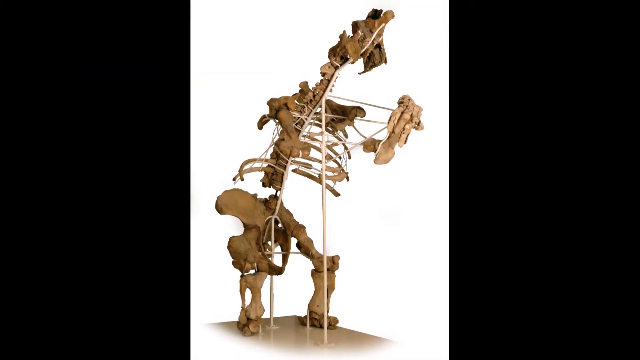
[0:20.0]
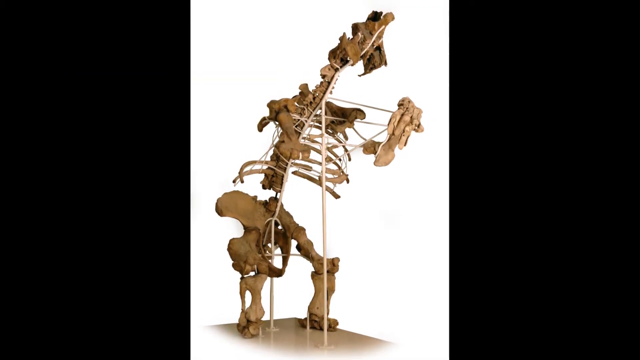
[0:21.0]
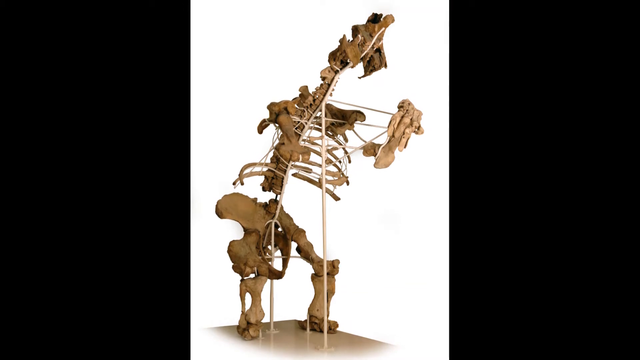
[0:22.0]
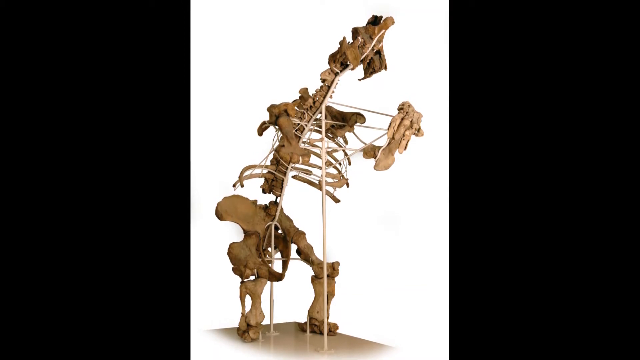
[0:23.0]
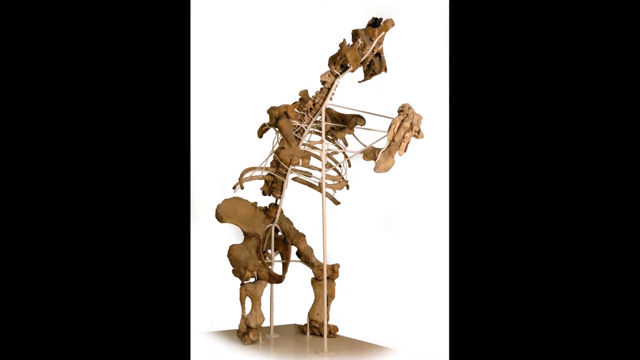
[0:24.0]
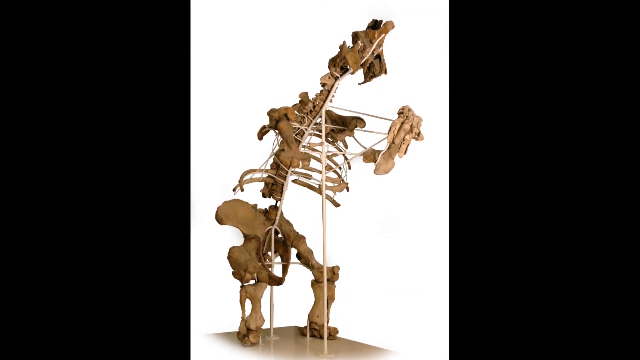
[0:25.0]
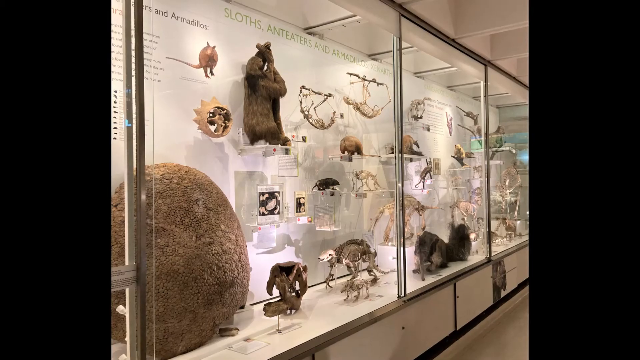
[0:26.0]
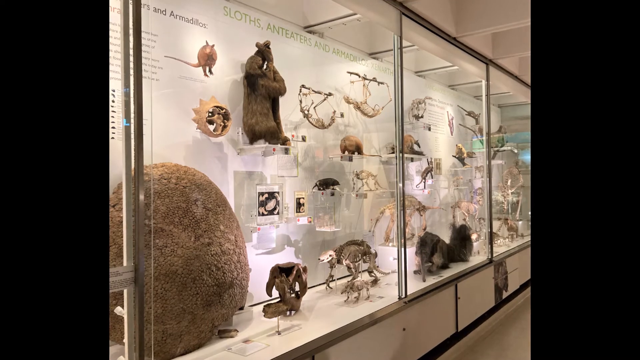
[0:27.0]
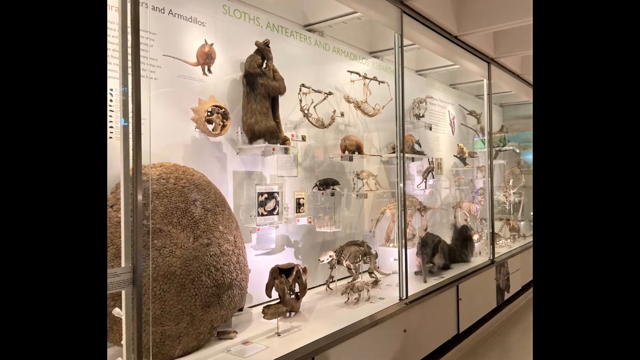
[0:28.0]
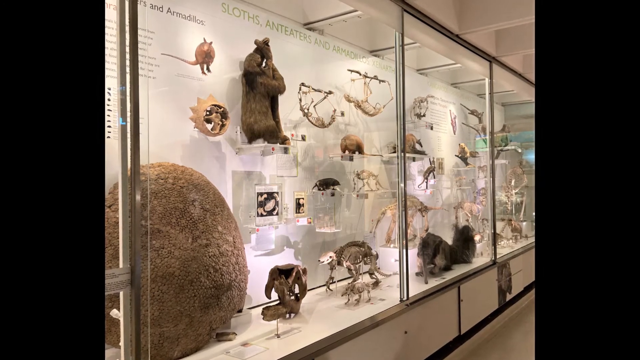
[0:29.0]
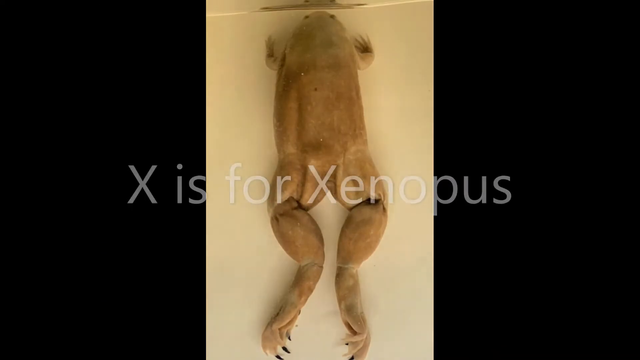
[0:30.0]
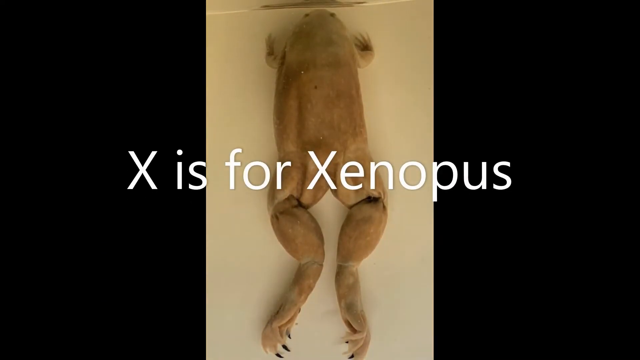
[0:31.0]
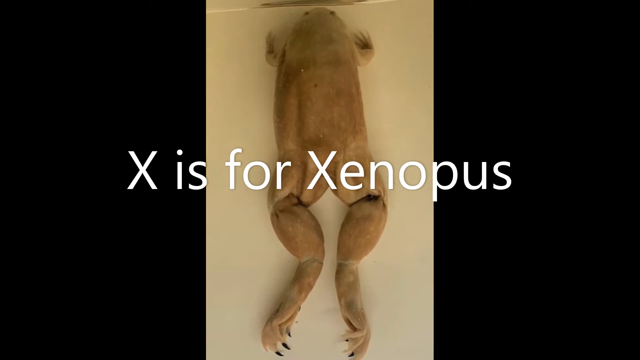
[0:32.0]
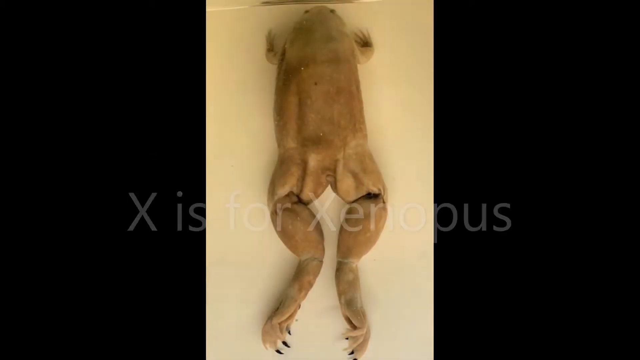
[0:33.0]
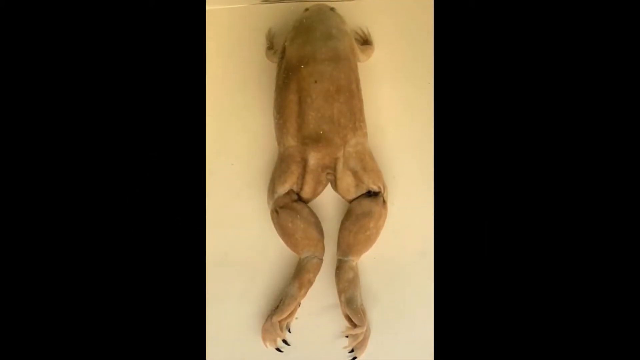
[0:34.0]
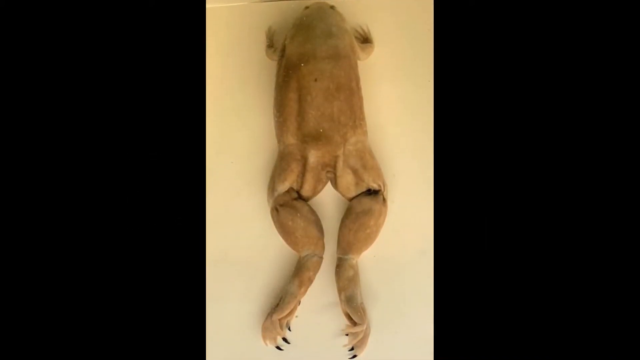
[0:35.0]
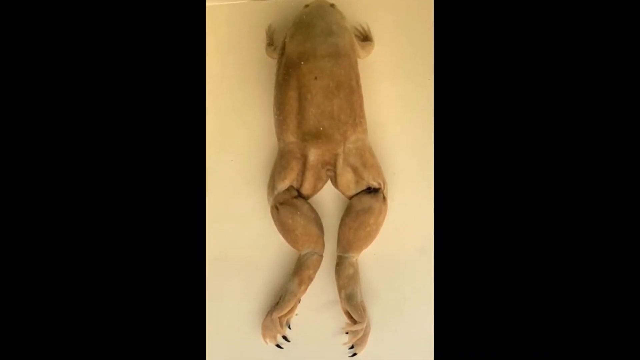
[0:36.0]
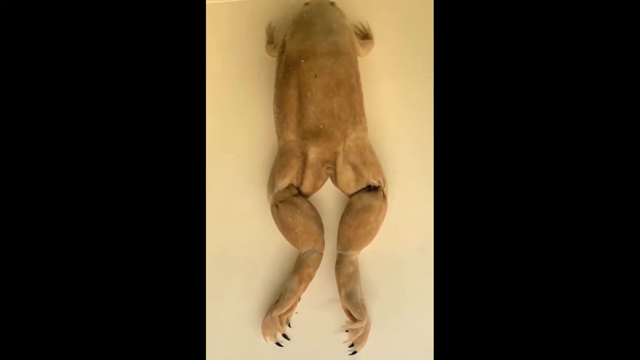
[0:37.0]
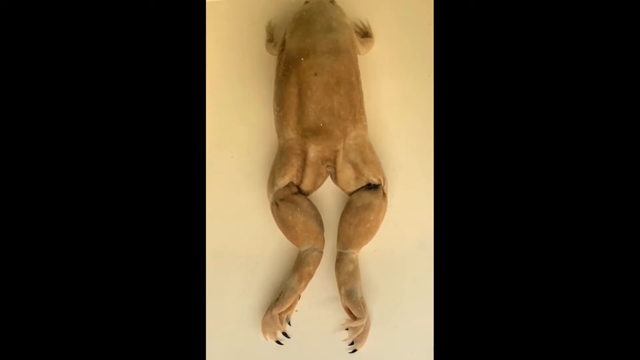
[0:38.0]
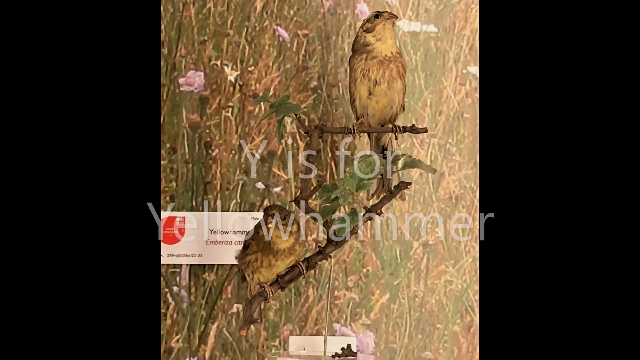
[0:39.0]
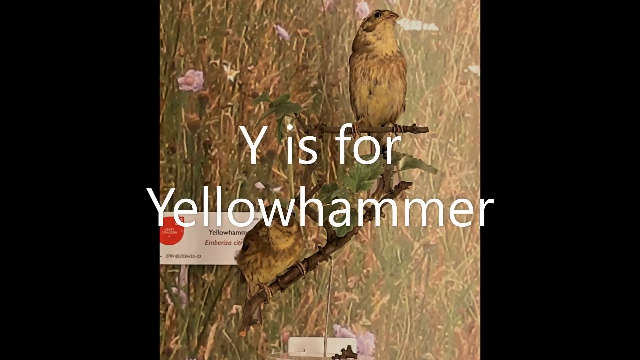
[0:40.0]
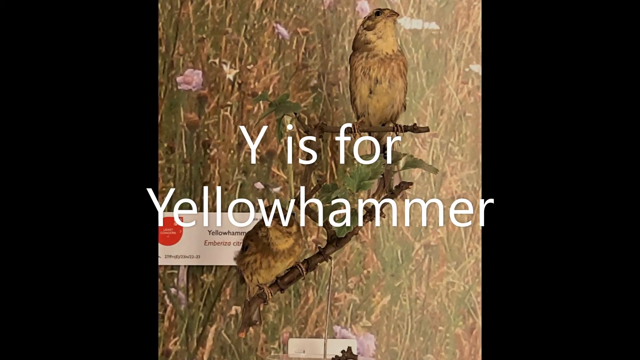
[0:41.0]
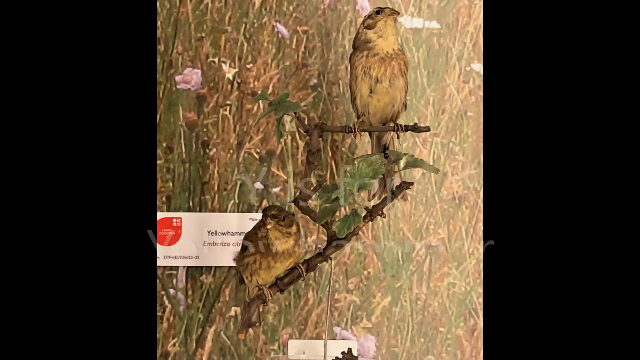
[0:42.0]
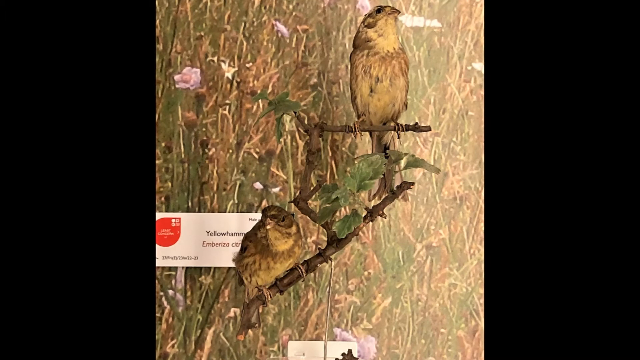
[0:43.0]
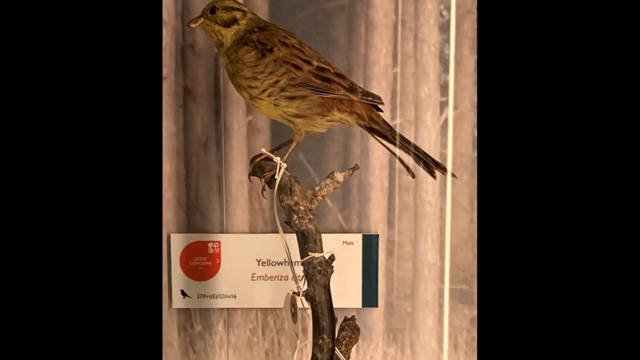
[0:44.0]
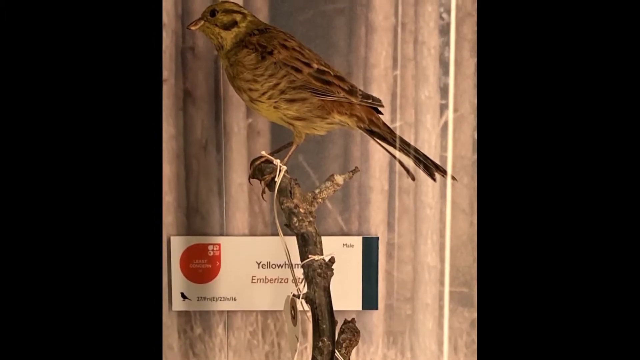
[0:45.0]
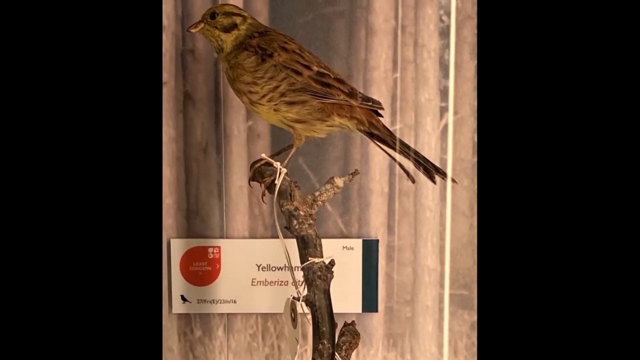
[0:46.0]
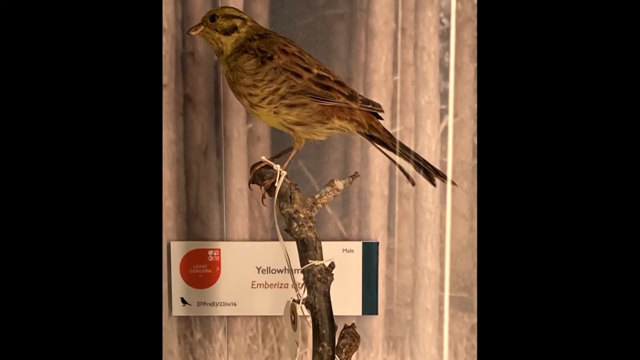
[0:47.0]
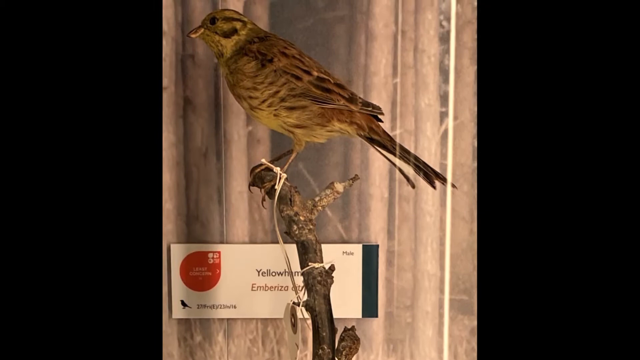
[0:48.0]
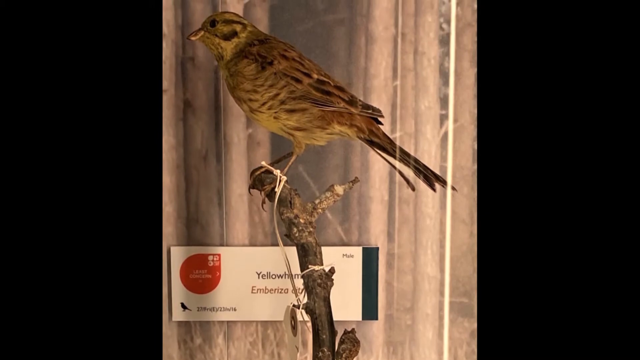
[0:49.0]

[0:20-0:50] An animal skeleton stands on its hind legs with its two arms sticking out. Behind a glass wall are different animals such as sloths and anteaters, shown both as skeletons and as creatures with fur, so it is possible to tell what they look like. A frog appears next with white text over it reading "X is for Xenopus"; the frog is not alive, showing what the body looks like. A different screen then reads "Y is for yellow hammer" and shows two birds on branches: one is higher, pointing its beak toward the right, and the other is on a lower diagonal branch looking toward the left. Another screen shows a single yellowhammer on its own on a stick, facing left.